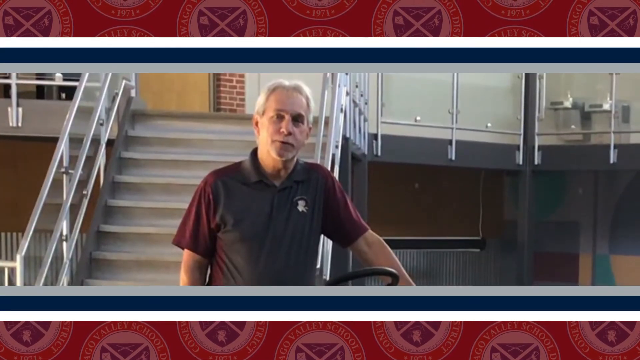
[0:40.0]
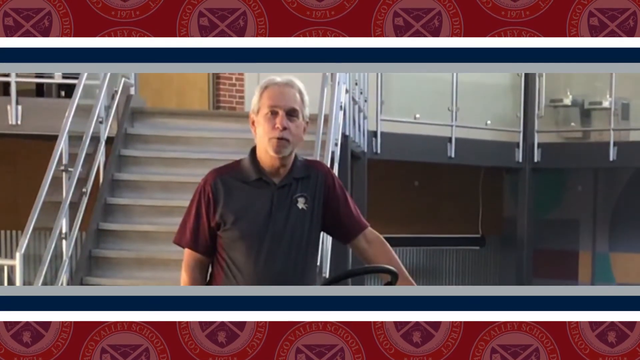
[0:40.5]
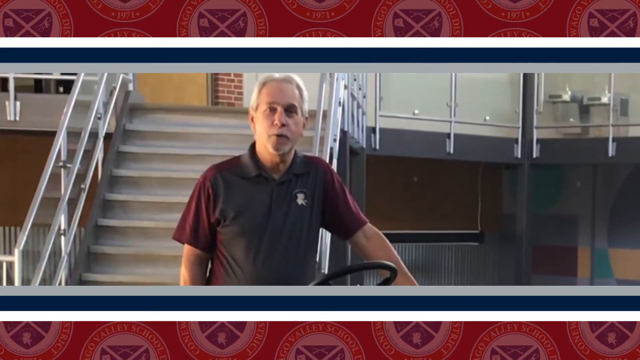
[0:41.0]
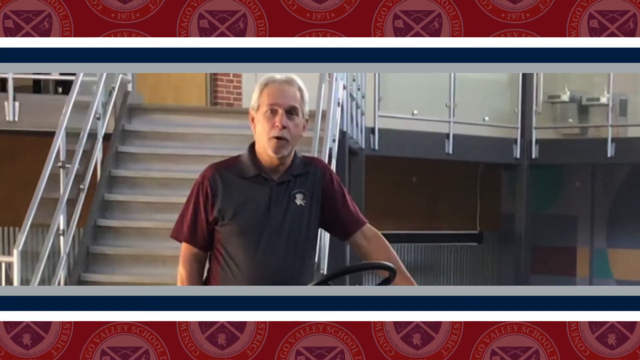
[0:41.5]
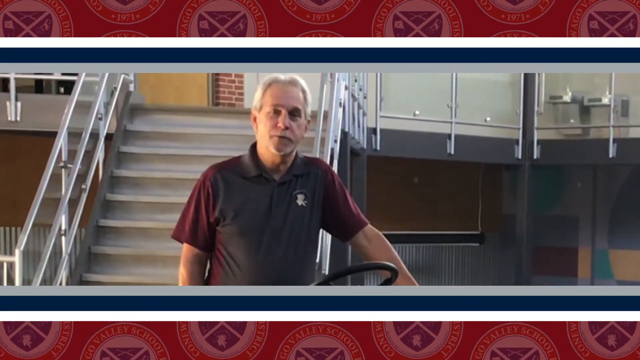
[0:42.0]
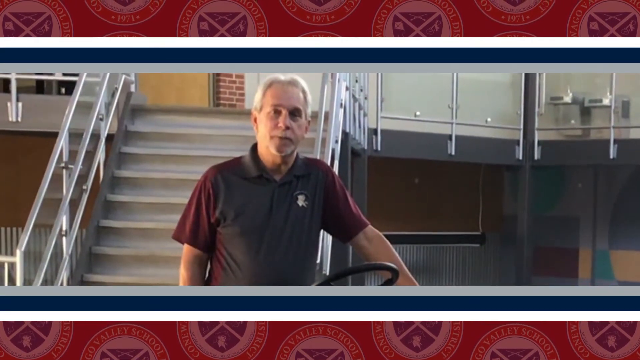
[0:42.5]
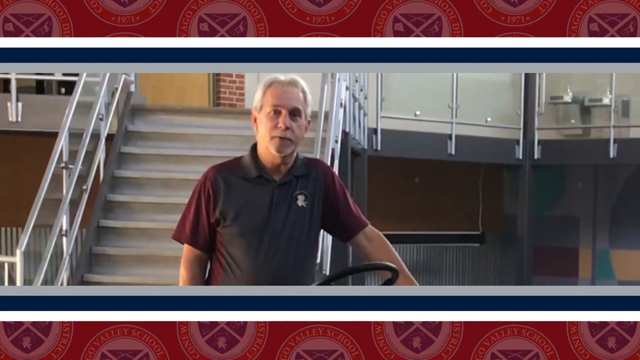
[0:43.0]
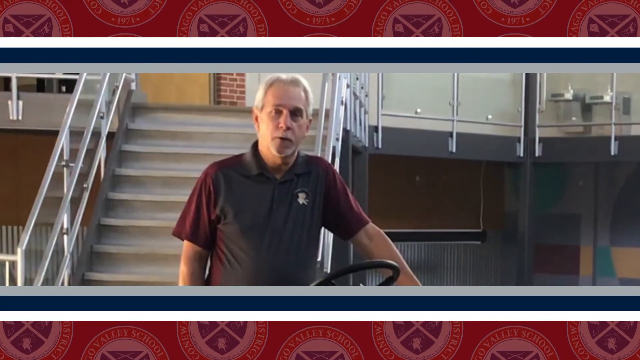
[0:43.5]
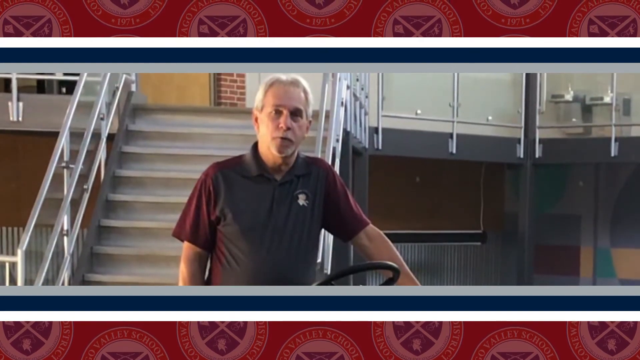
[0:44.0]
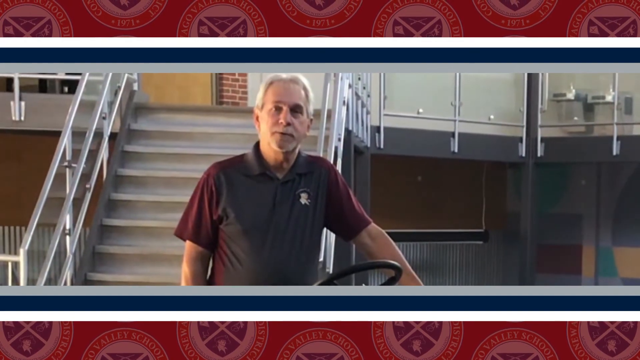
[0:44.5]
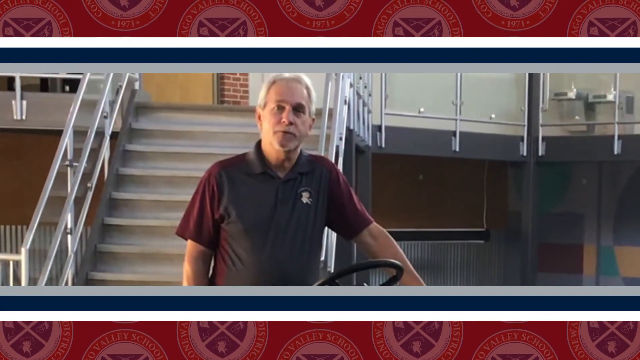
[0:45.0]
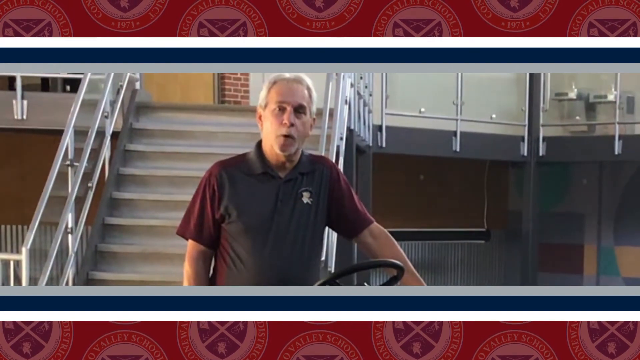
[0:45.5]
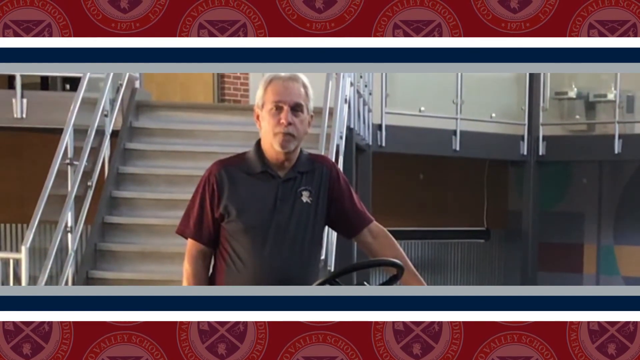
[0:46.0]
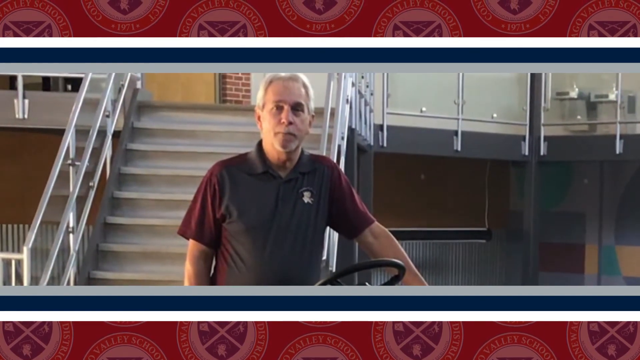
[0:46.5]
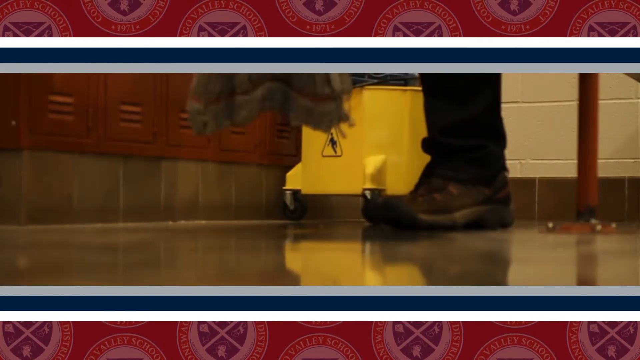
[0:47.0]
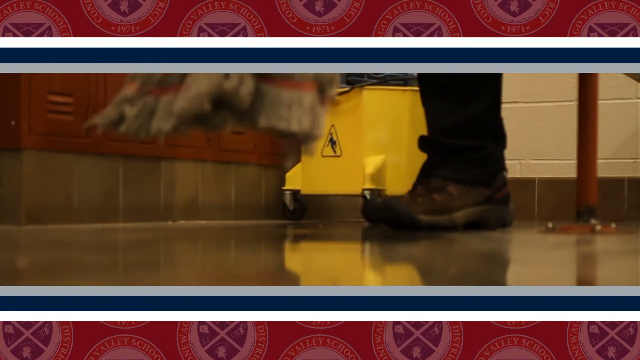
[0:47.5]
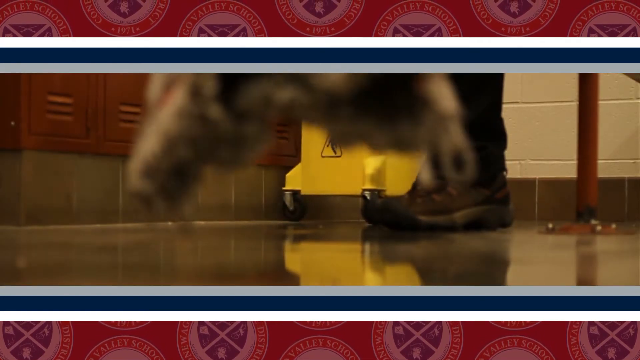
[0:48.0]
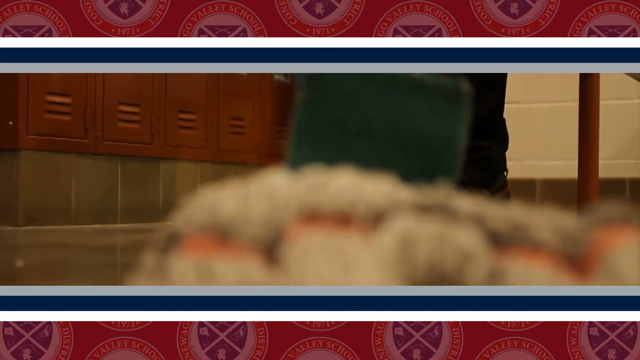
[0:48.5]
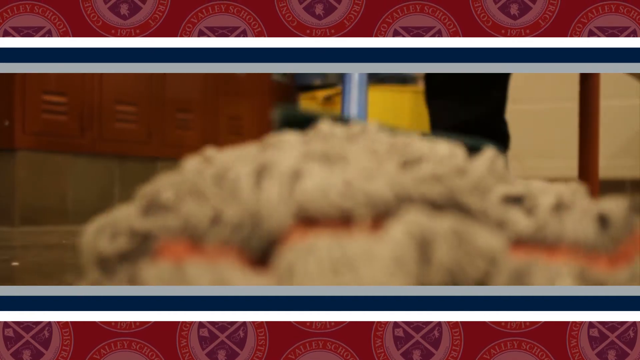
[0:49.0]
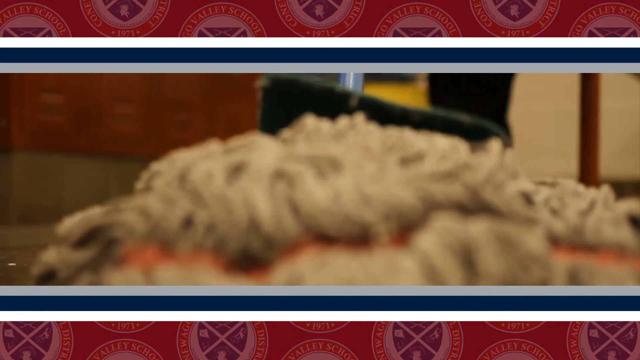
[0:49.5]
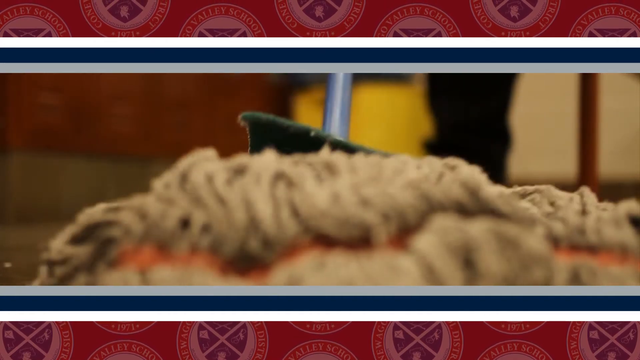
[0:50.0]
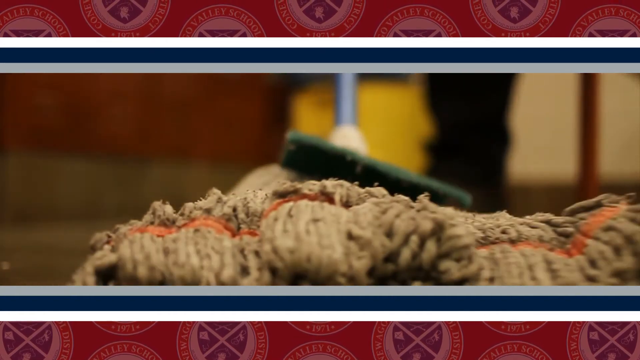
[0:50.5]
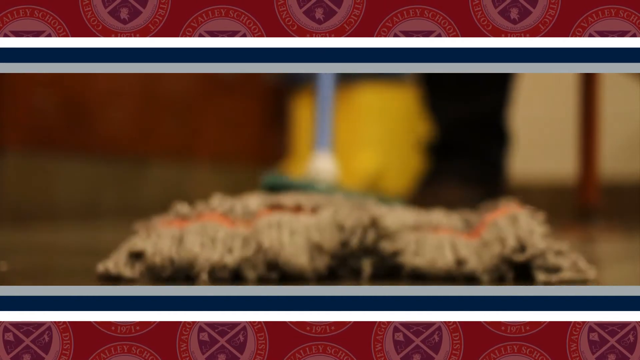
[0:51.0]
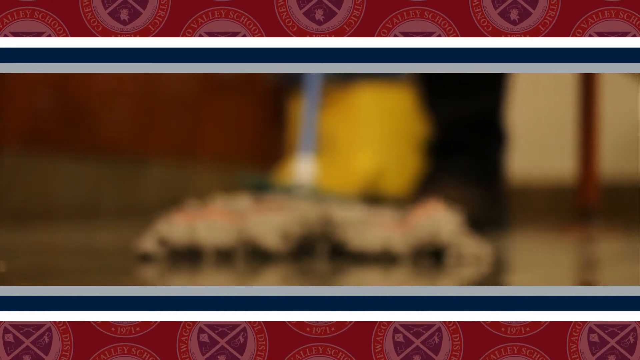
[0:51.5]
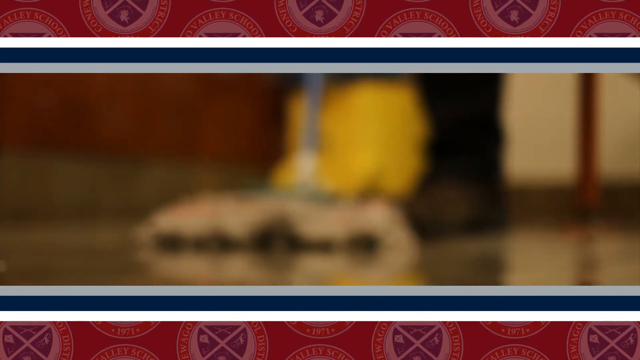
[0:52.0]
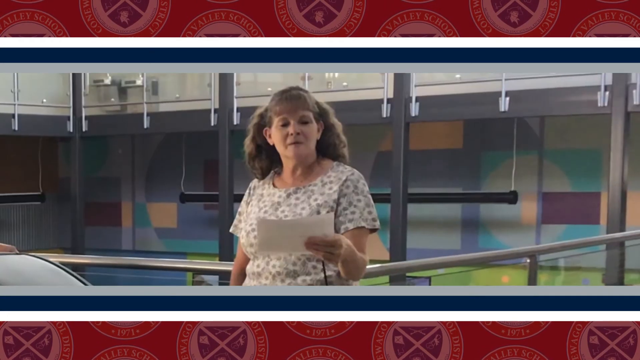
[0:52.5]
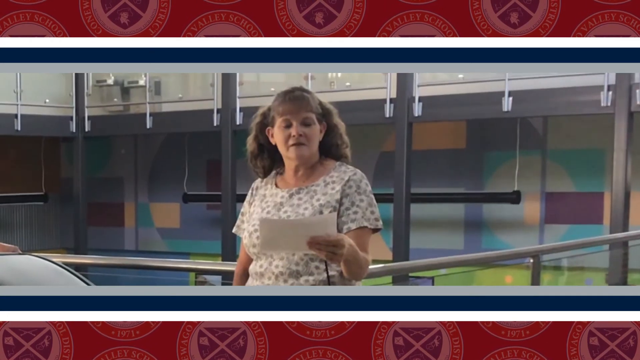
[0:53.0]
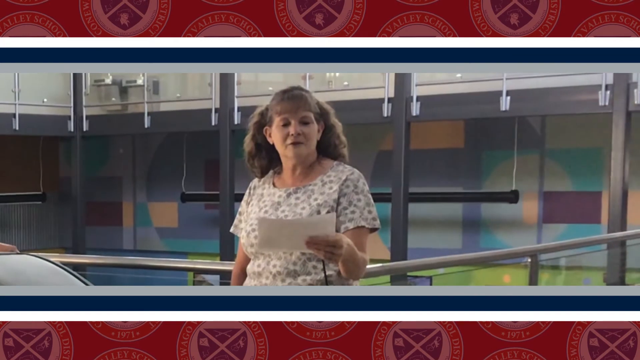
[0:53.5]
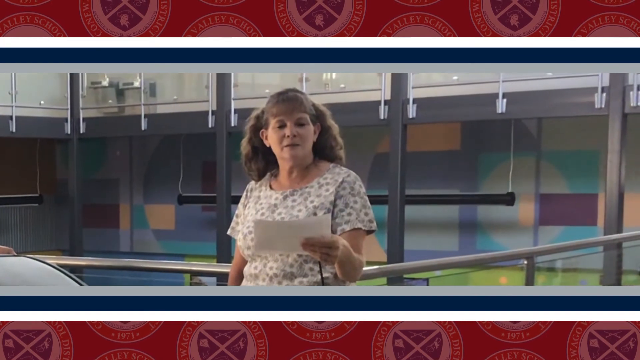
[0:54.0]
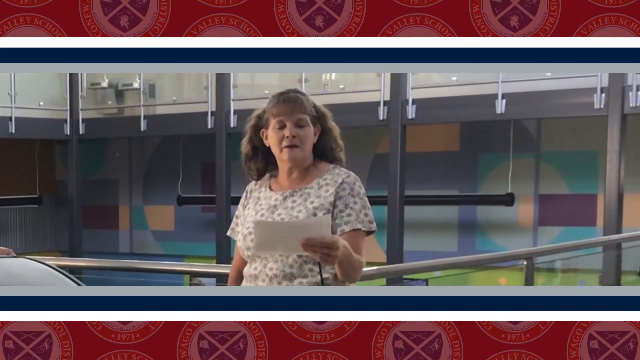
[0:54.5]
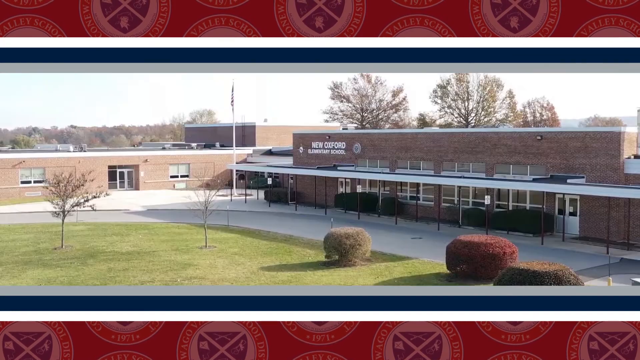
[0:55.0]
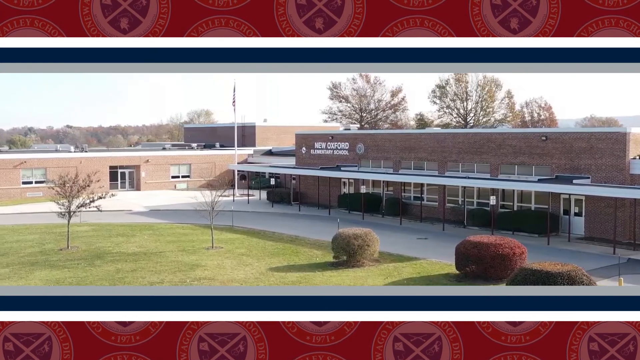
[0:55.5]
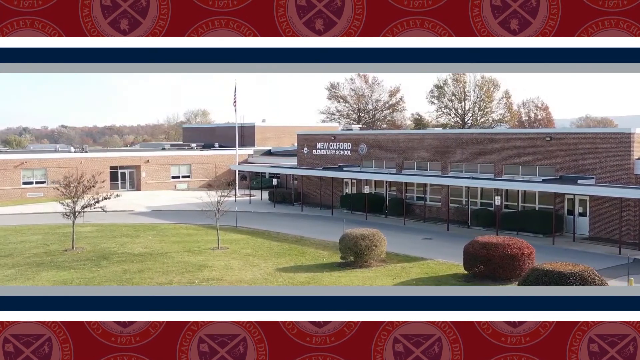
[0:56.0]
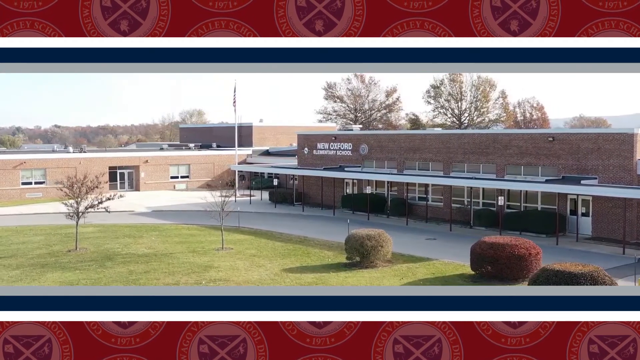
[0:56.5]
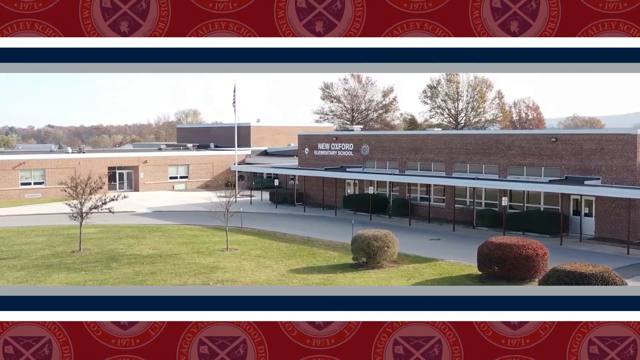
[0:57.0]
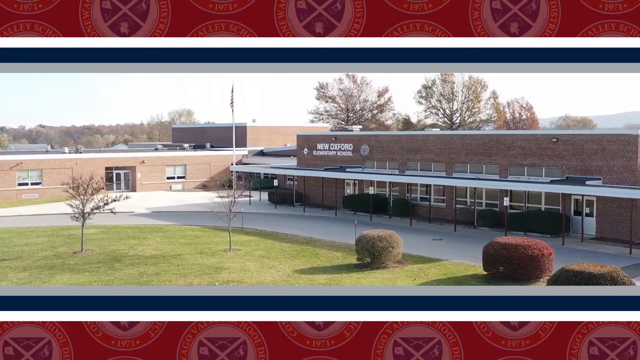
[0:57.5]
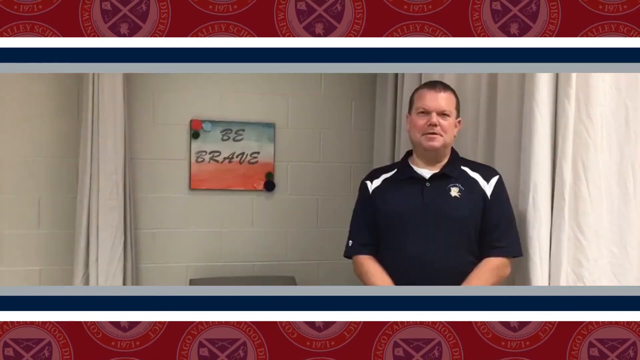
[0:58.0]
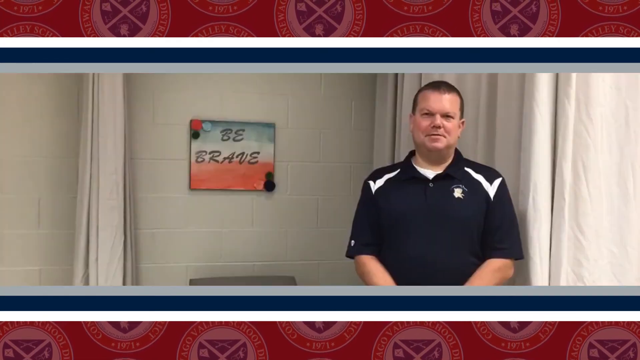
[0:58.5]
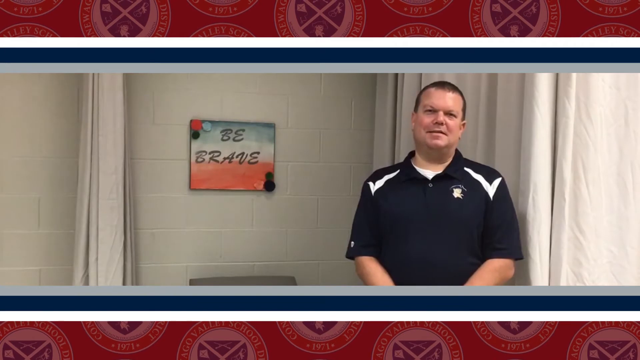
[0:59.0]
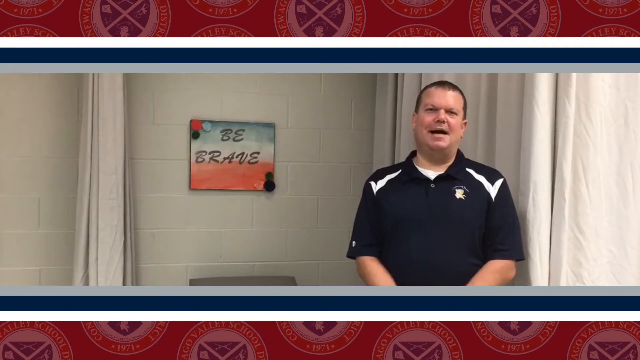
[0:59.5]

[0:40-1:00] Another man speaks to the camera. He has white hair and appears to be standing over a wheel of some sort, or perhaps sitting. Behind him, a set of stairs leads up to a second floor with a raised walkway with a glass and metal guardrail. The video then transitions to someone mopping a floor, filmed from a very low angle that shows the person's feet and the bucket next to him. The mop comes down from above, is placed just in front of the camera, and is then swept forward away from the camera. Next, a woman appears to be standing on a raised walkway with a railing just behind her; she holds a piece of paper in front of her, looking at it and speaking. The video then shows another outdoor view: a lawn with well-trimmed bushes and short trees, with a road curving around it that separates it from the building in the background. It then transitions to another man speaking to the camera in a room.